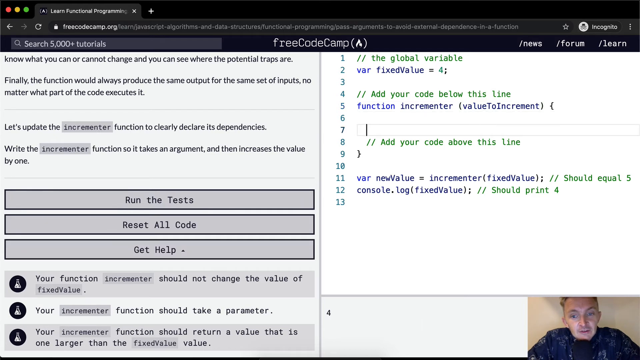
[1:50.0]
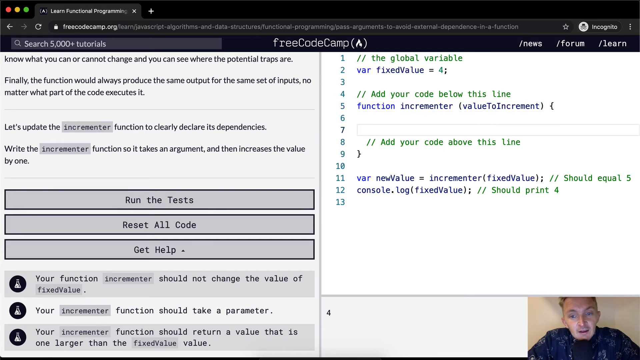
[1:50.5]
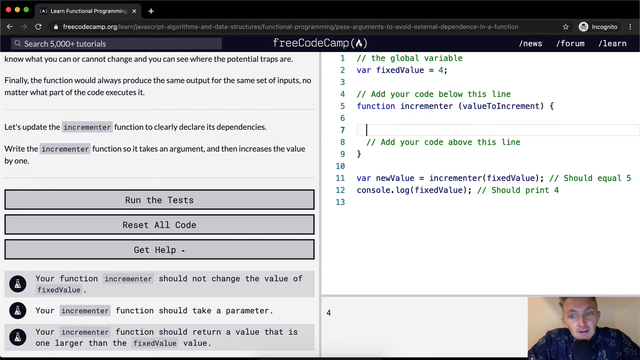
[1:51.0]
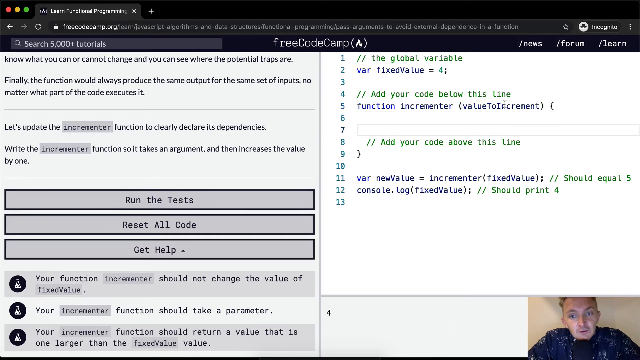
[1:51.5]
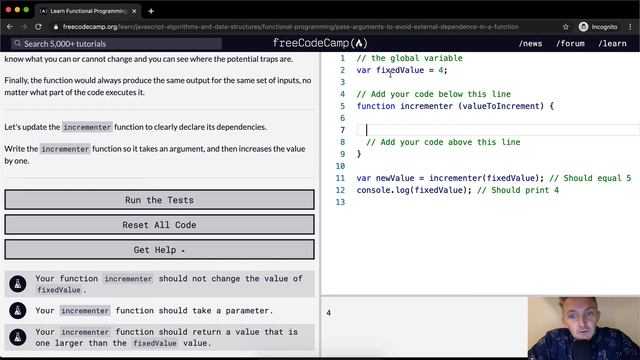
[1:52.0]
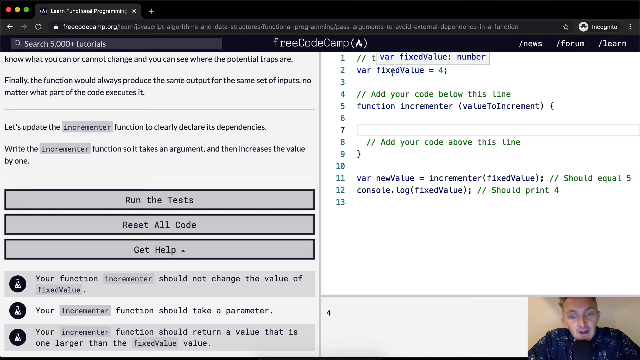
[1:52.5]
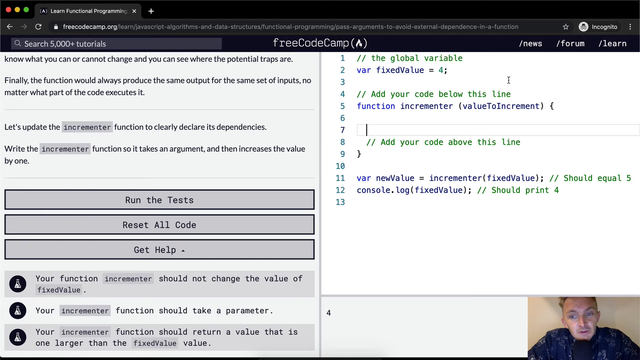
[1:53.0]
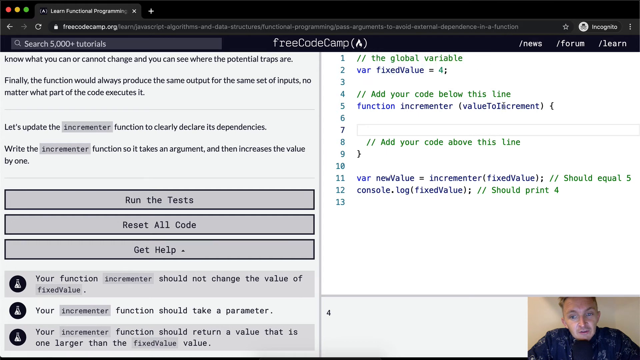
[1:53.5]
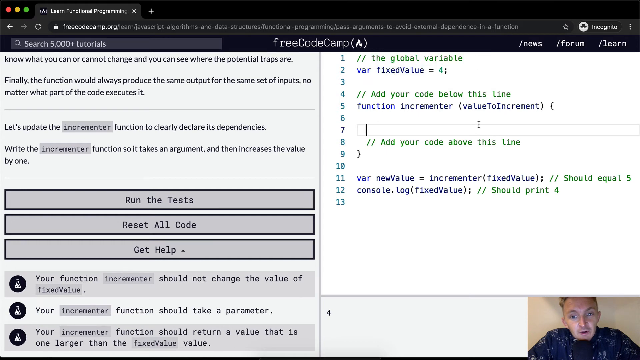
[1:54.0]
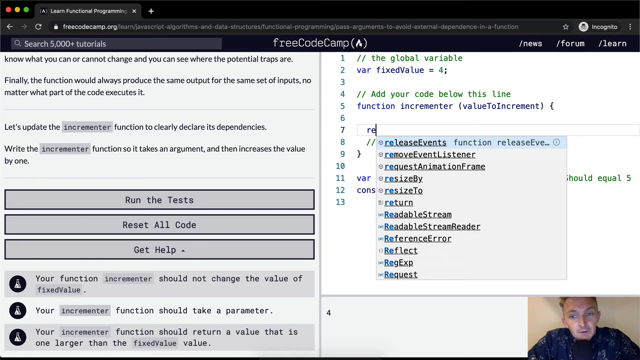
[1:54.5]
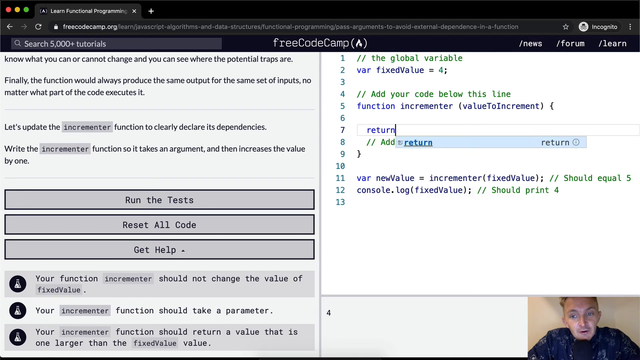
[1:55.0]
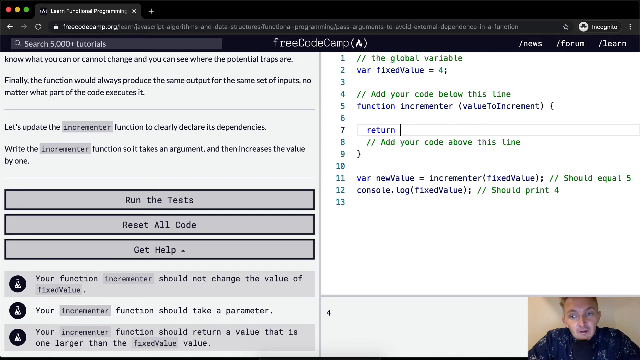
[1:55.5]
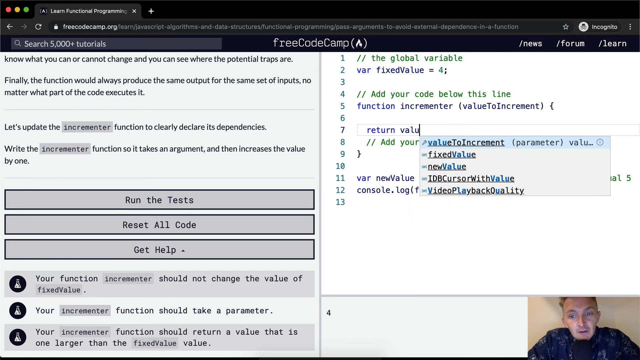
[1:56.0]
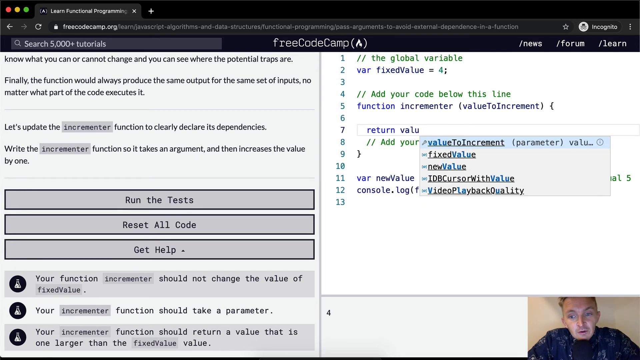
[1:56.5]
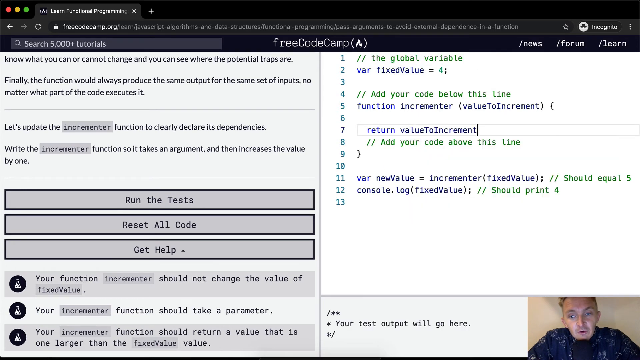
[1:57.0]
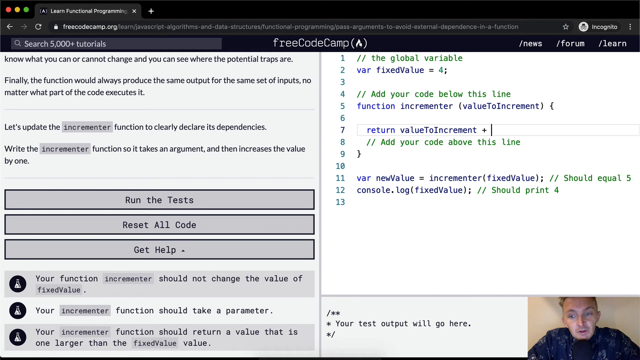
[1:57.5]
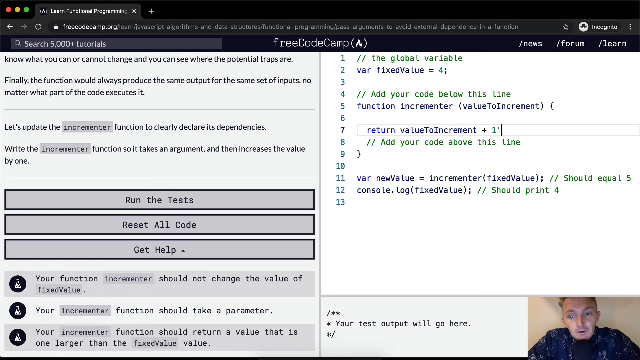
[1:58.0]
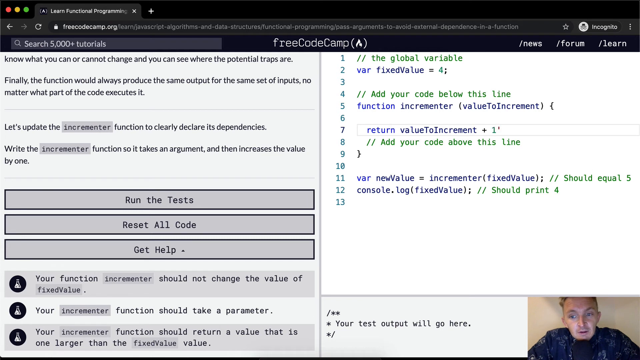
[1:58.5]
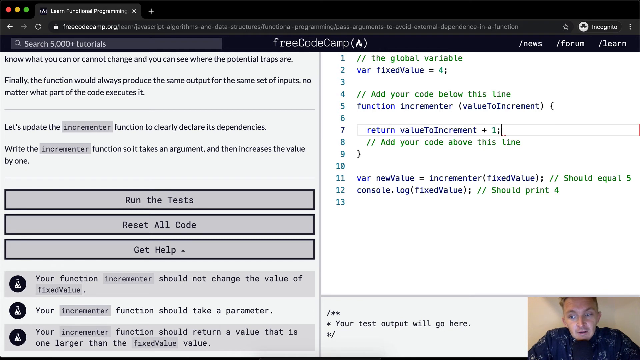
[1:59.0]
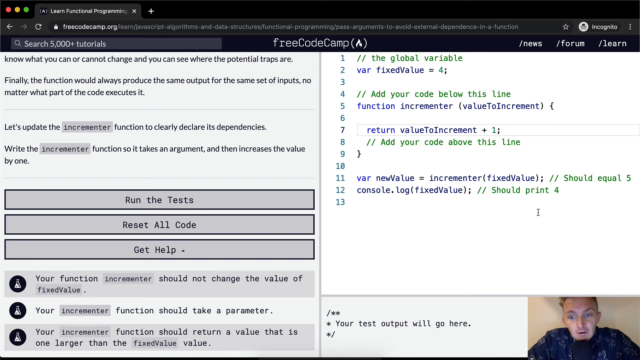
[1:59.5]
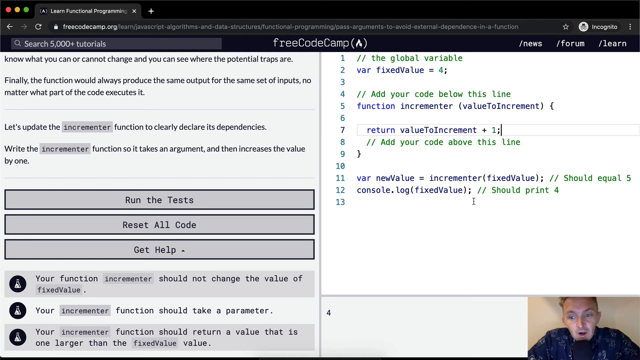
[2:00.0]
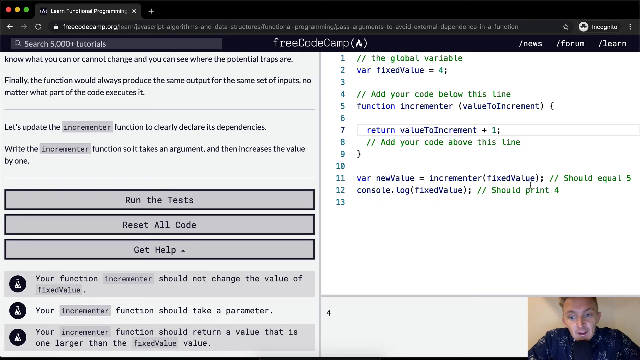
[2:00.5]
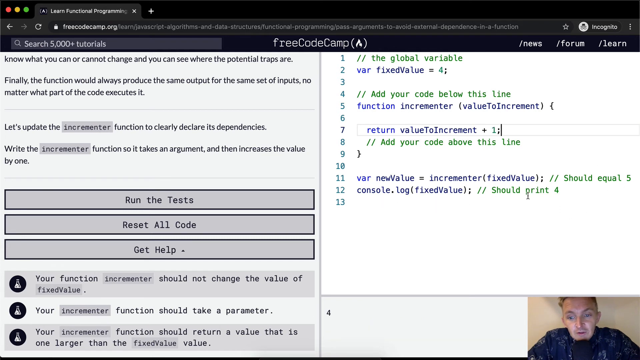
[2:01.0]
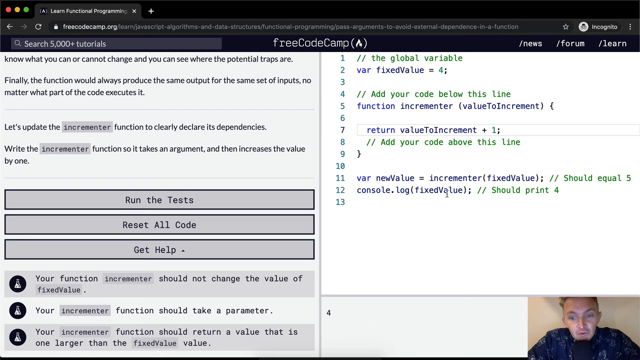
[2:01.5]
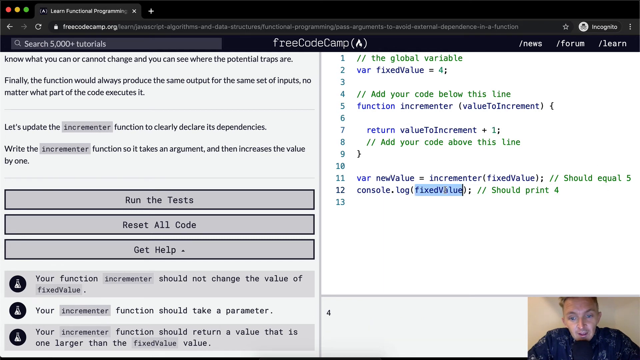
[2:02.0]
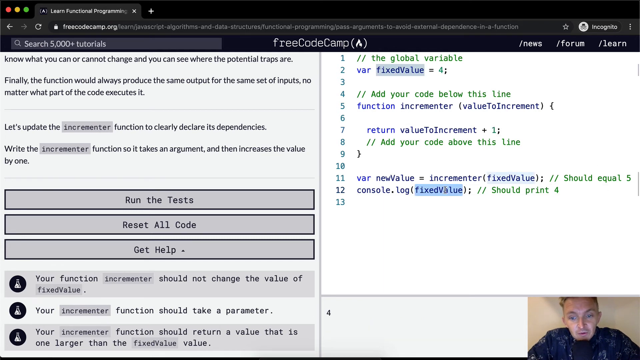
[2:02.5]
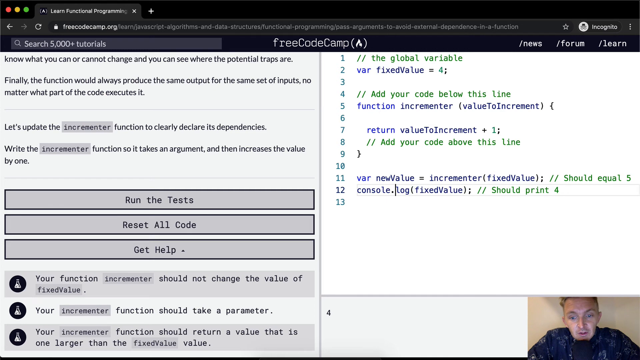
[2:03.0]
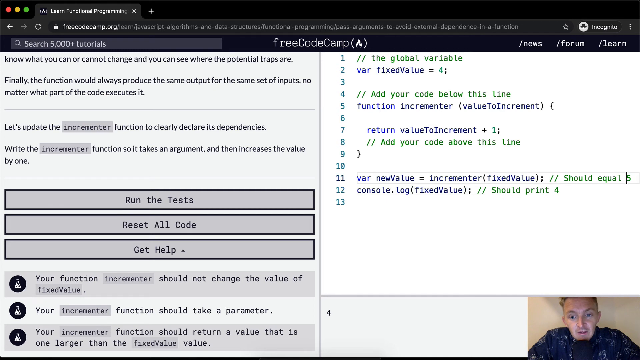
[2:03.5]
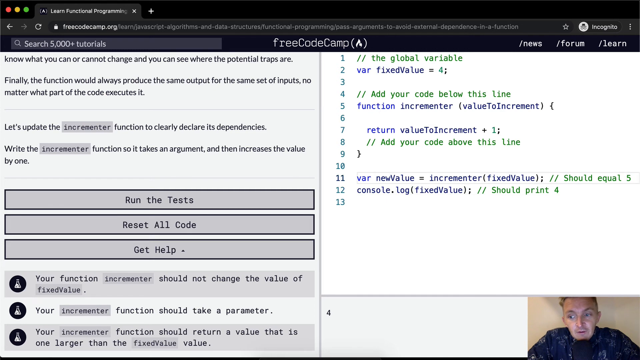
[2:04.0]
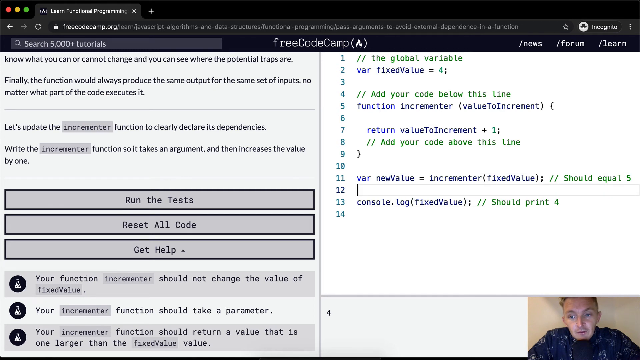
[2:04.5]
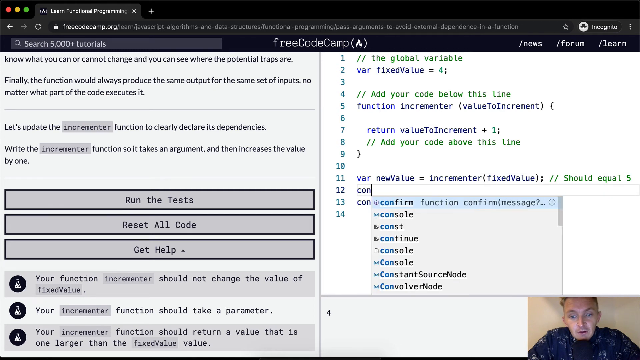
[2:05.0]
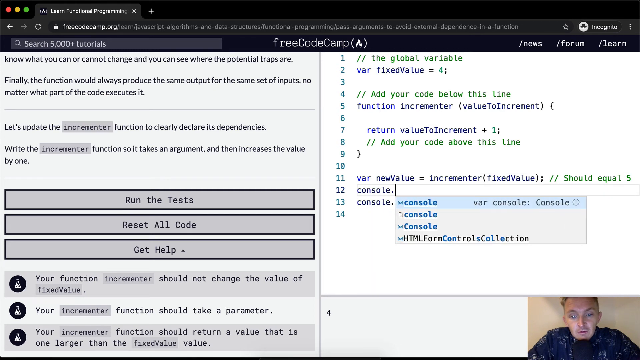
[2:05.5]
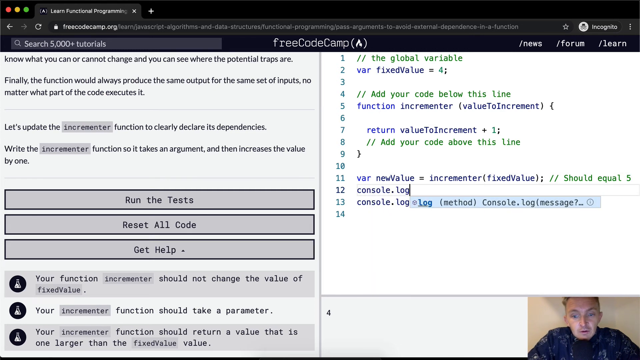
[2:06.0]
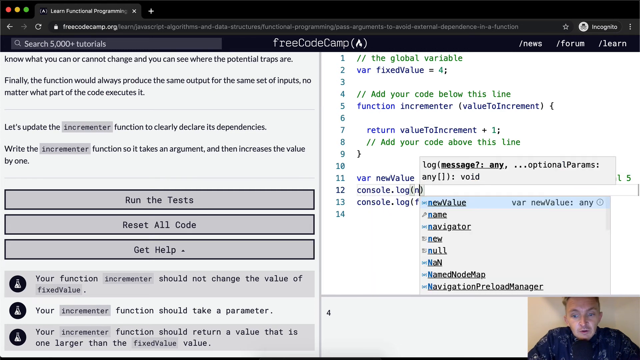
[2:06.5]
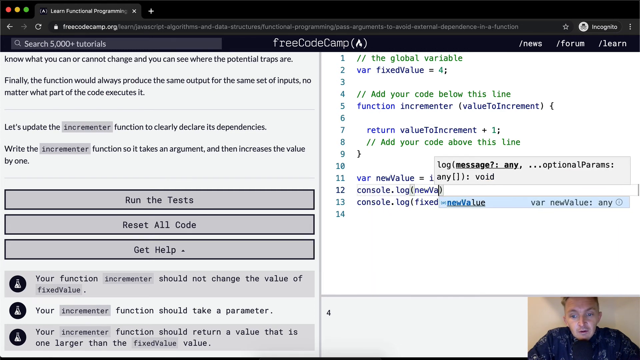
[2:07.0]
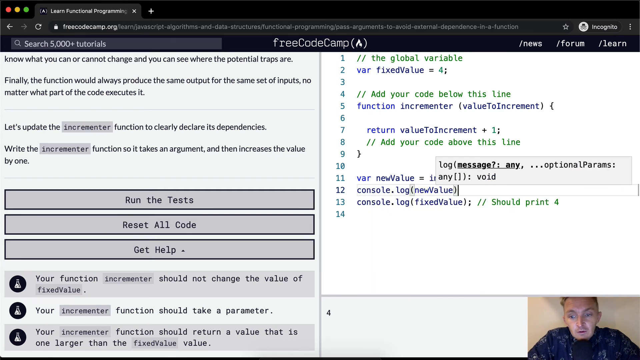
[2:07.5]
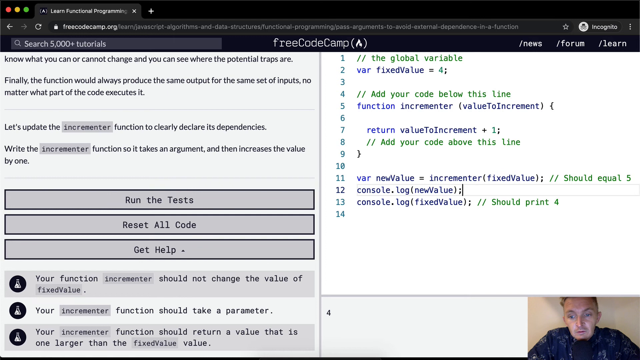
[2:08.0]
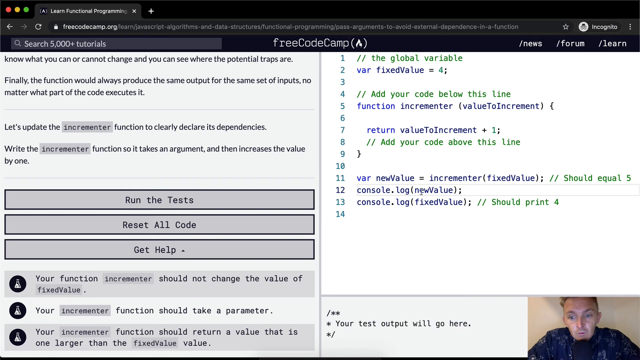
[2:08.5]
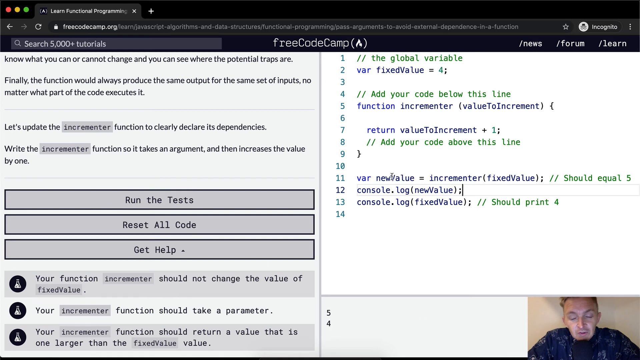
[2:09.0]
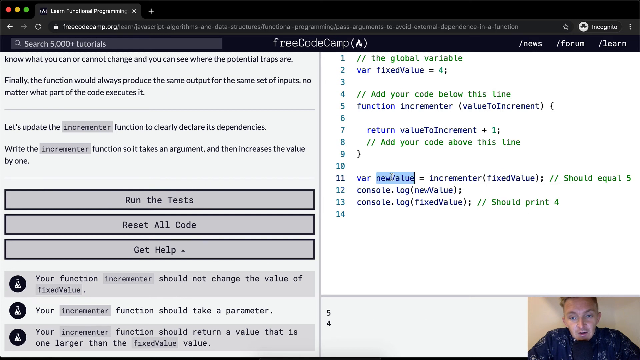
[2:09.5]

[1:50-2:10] The result is shown: line 7 reads "return value increments plus one," with an apostrophe shown. The fixed value is highlighted on line 11, and on line 12 a console.log is edited, with the console.log of the fixed value moved to line 13. The test output is shown. The person doing the coding applies the information on the right side to see the output and whether the code runs.